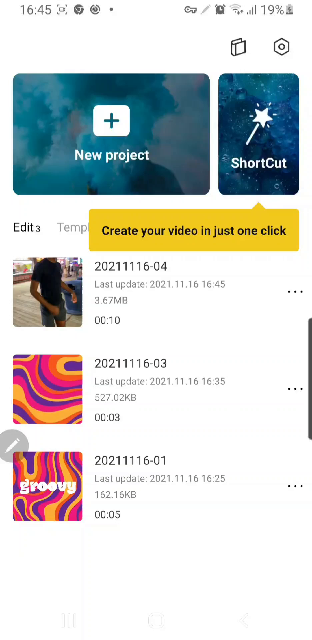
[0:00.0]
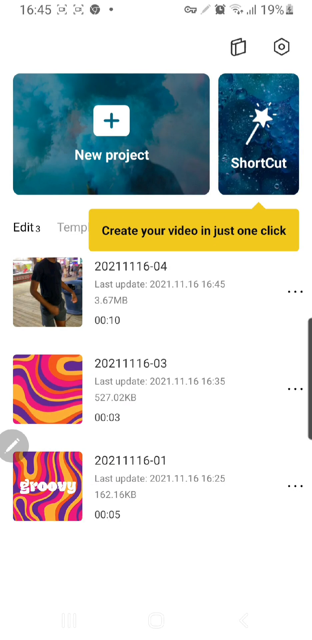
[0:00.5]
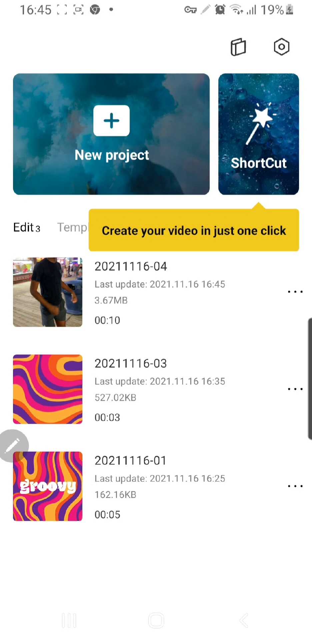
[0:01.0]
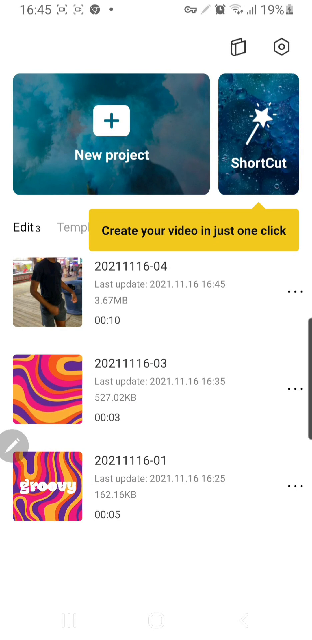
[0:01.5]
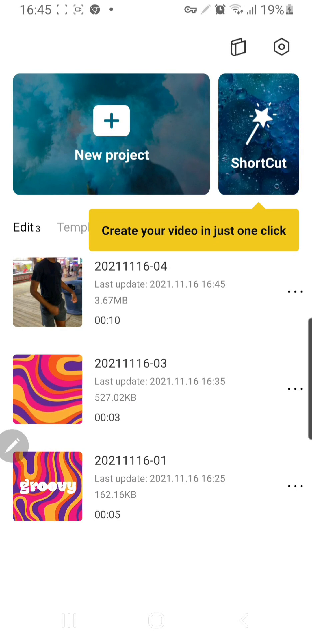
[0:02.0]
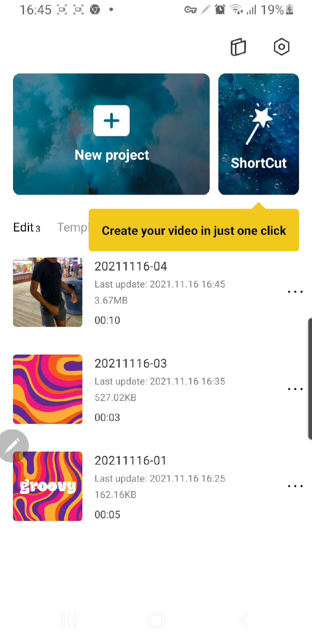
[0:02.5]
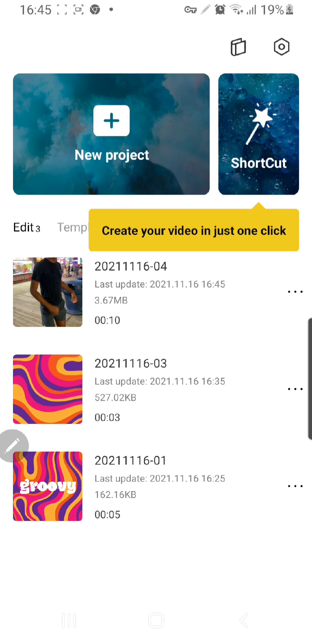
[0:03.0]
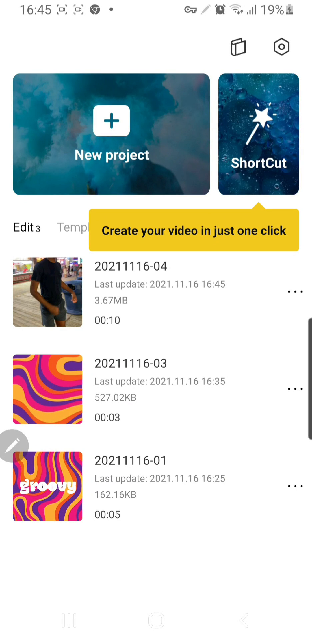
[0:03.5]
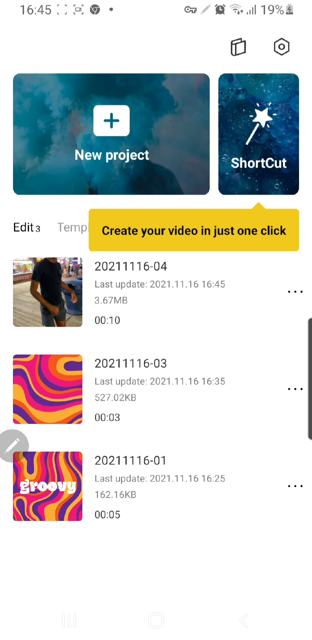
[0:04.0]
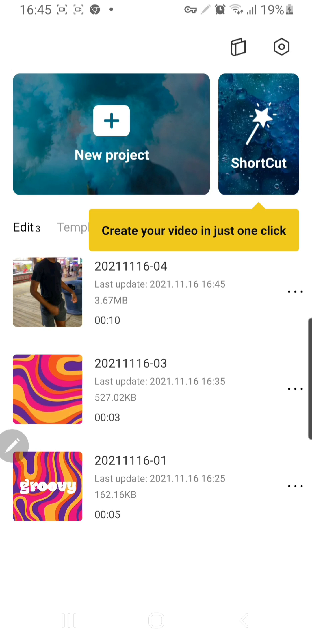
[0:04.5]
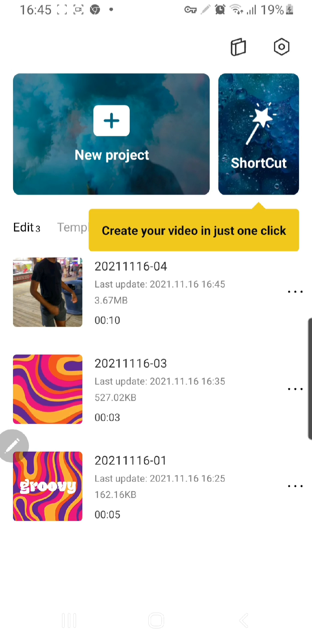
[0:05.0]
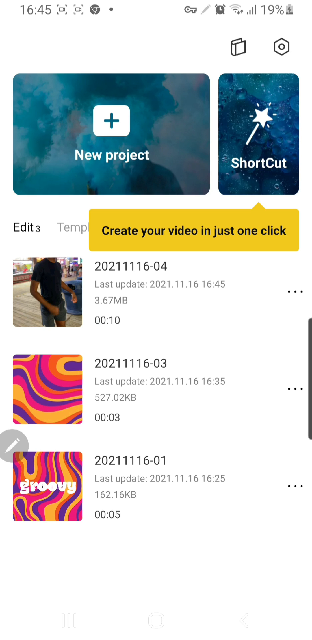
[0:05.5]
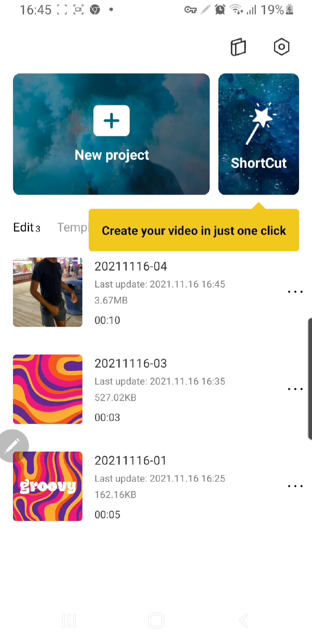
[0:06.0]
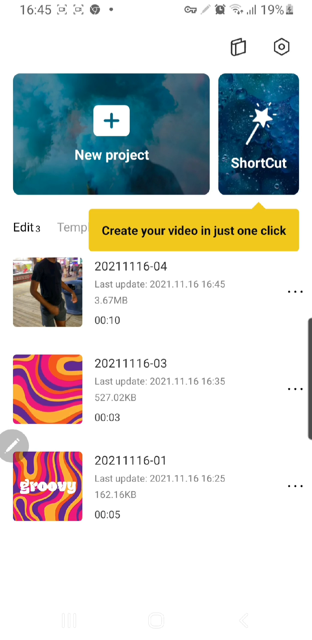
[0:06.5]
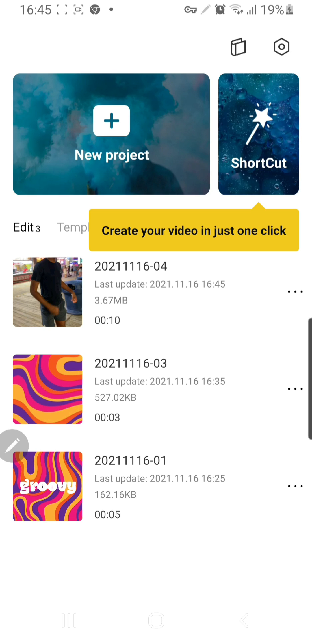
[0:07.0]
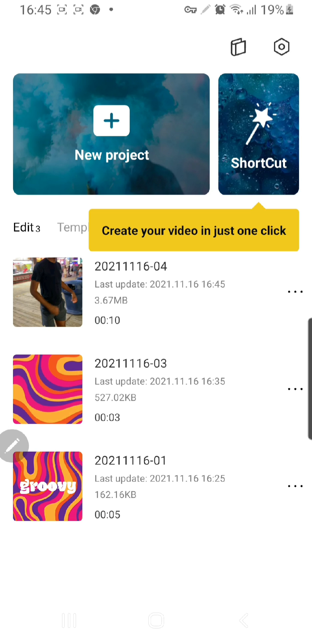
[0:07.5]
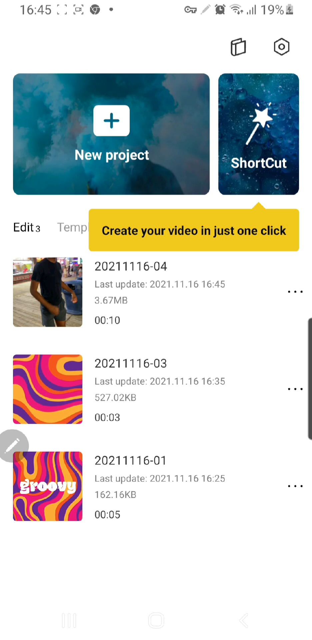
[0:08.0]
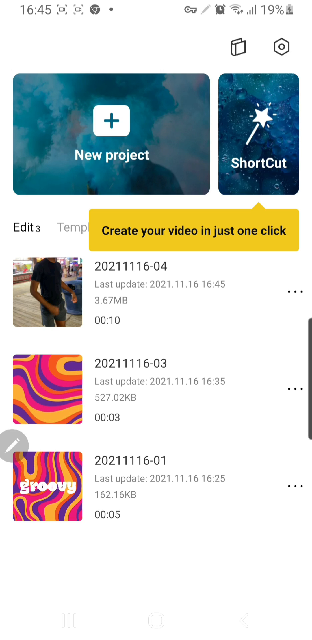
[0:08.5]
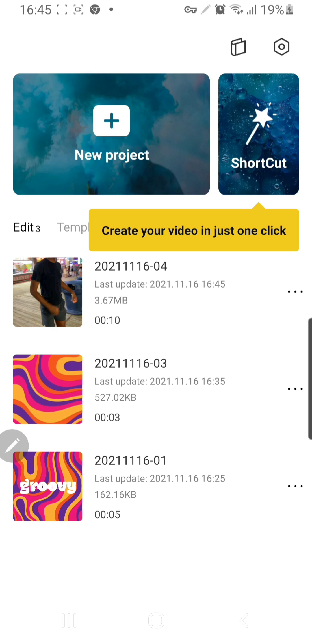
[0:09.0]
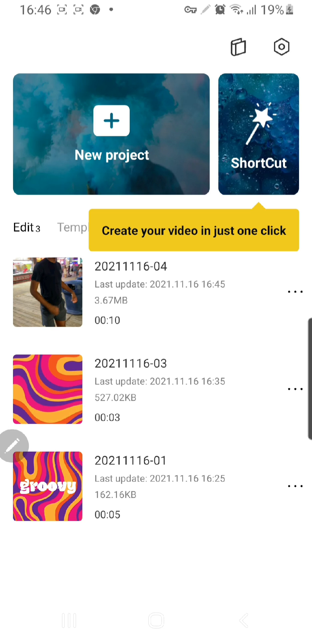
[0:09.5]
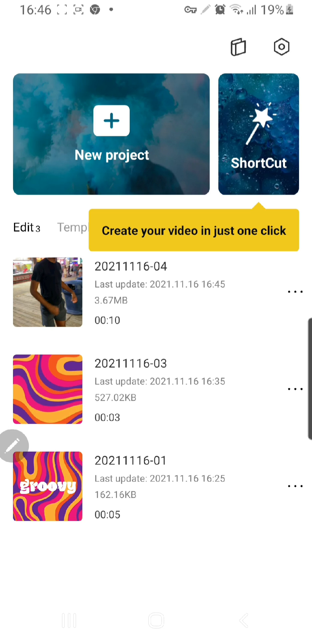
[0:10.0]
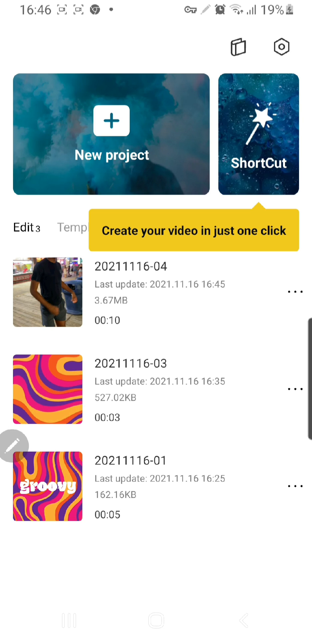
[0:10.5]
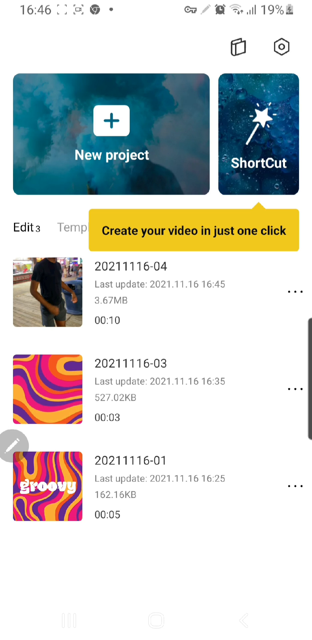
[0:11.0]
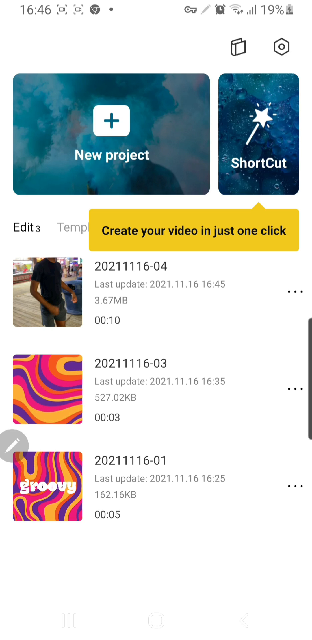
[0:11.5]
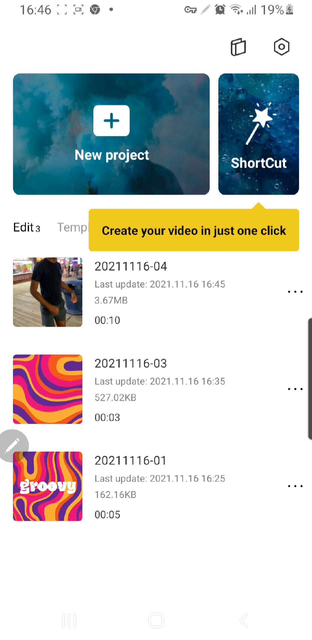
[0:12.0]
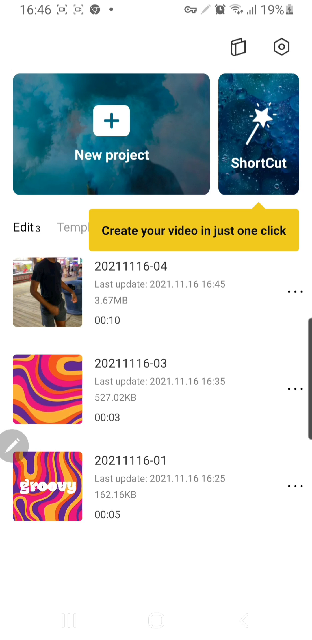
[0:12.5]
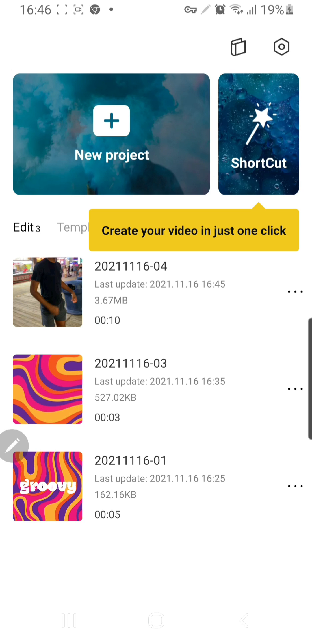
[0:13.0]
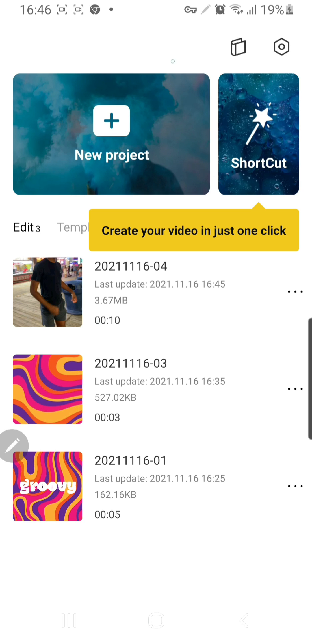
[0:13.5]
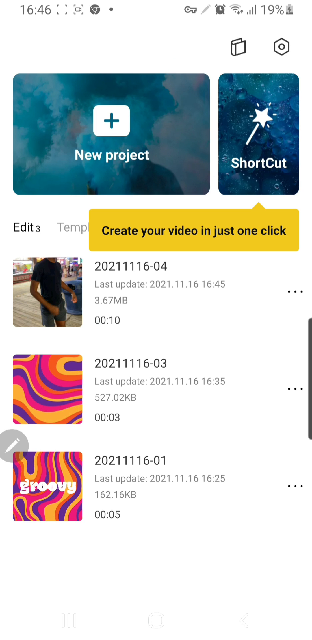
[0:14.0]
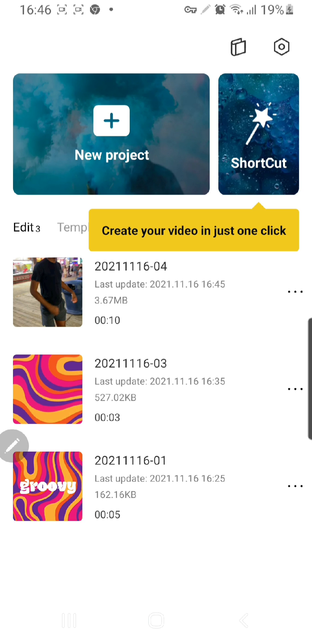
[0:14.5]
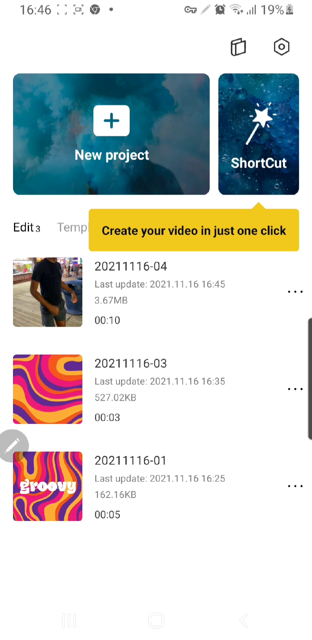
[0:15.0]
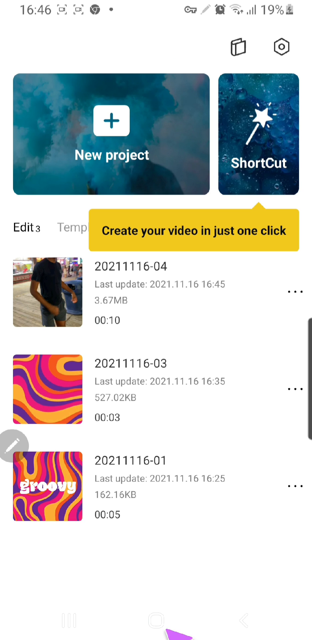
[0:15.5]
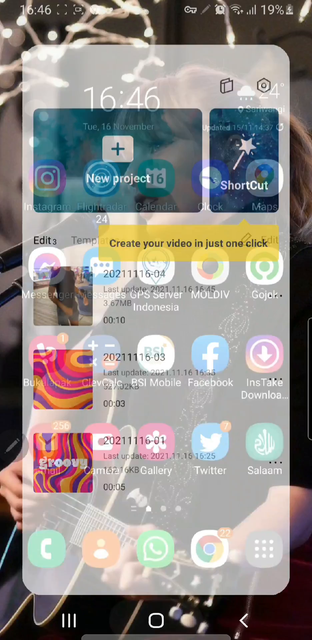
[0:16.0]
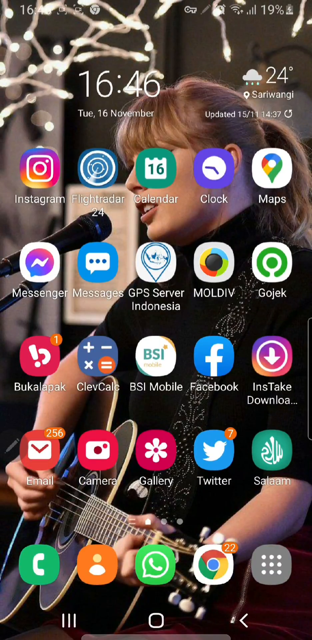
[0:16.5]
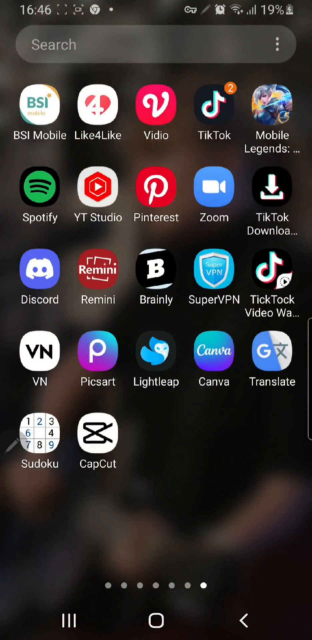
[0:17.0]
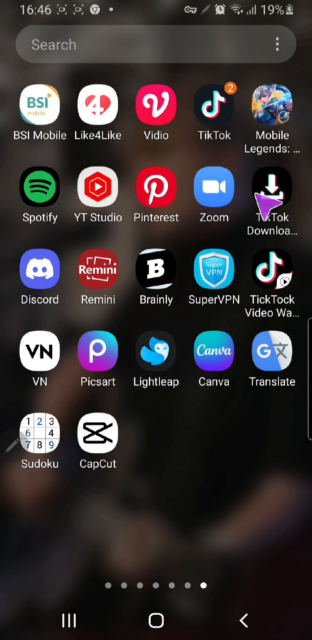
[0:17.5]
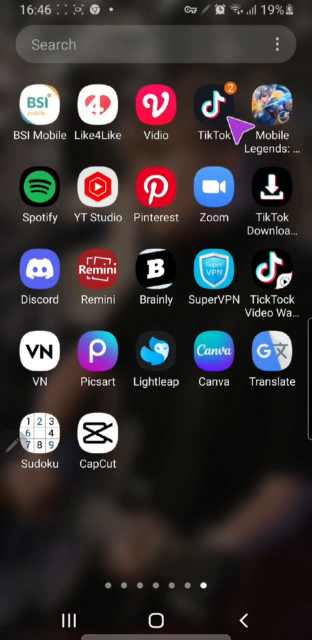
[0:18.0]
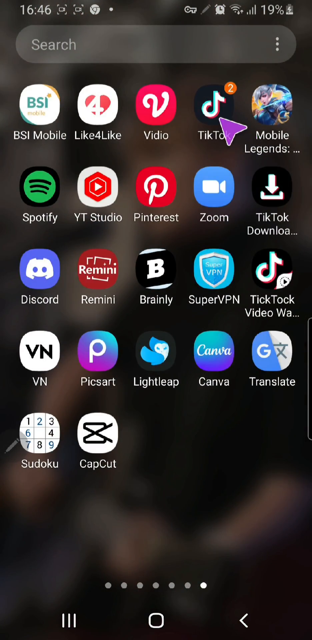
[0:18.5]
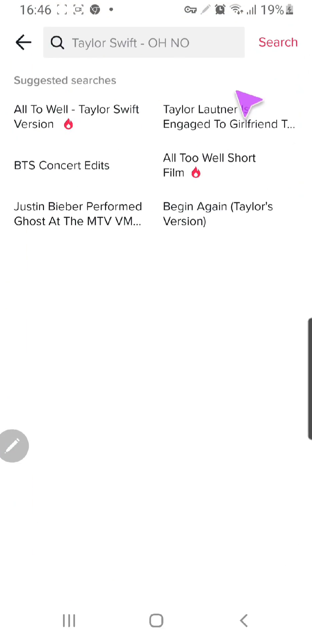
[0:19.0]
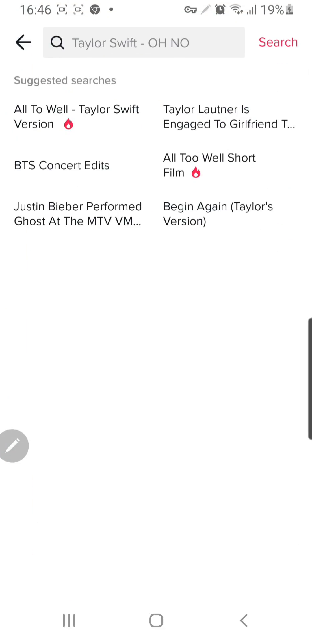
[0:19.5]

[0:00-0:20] A cell phone screen shows an open program. Three videos appear in the bottom center, with their thumbnails on the left side, lined up vertically. The top thumbnail shows a person whose face and legs are not visible. The bottom two thumbnails are very colorful, both with a psychedelic design, and the bottom one has the word "groovy" in white text. To the right of the thumbnails are the video names, which are just numbers with no words. At the top are two buttons, one for a new project and one for a shortcut. The program is minimized, revealing the home screen icons of all the apps on the phone and a wallpaper of Taylor Swift. The user selects the TikTok application, and the search bar says "Taylor Swift".